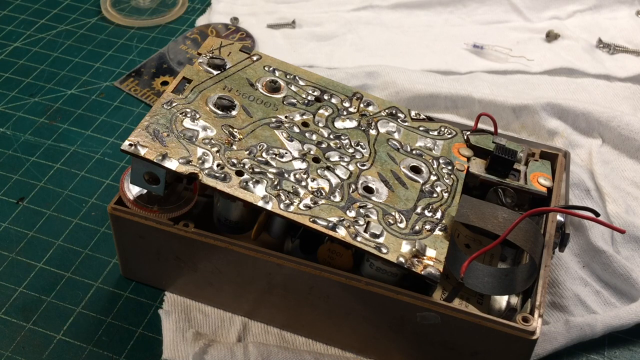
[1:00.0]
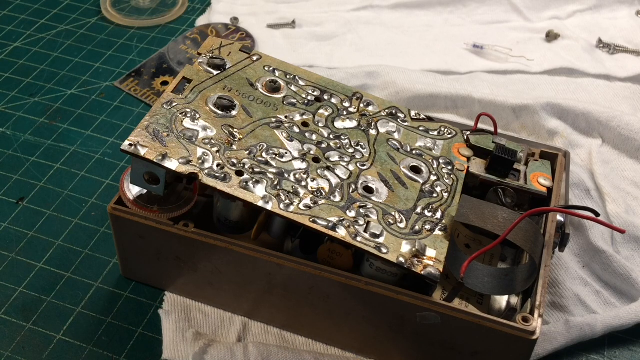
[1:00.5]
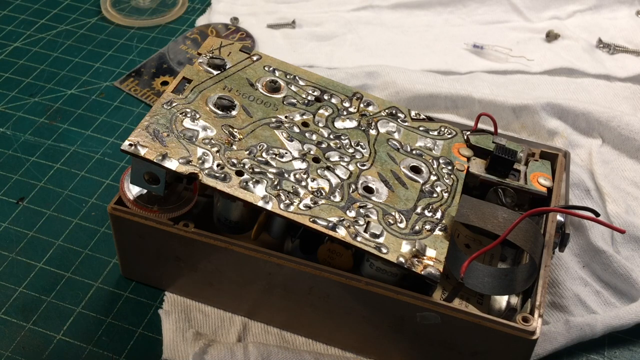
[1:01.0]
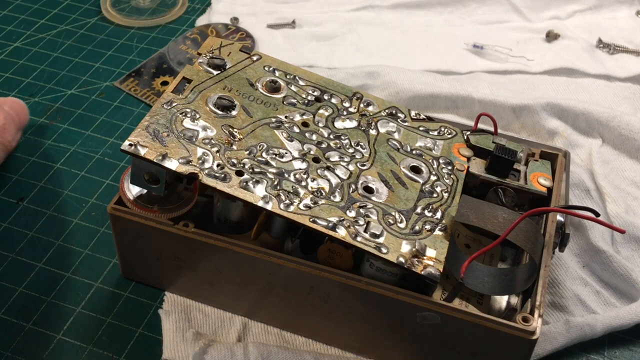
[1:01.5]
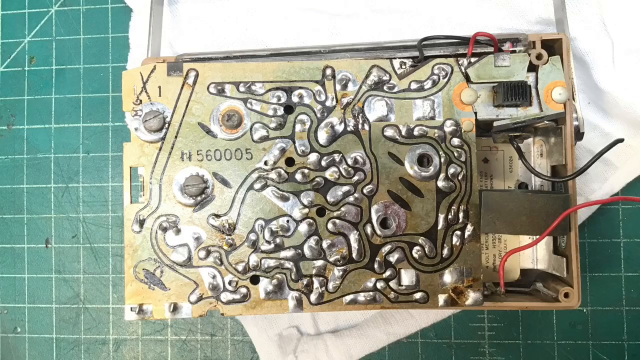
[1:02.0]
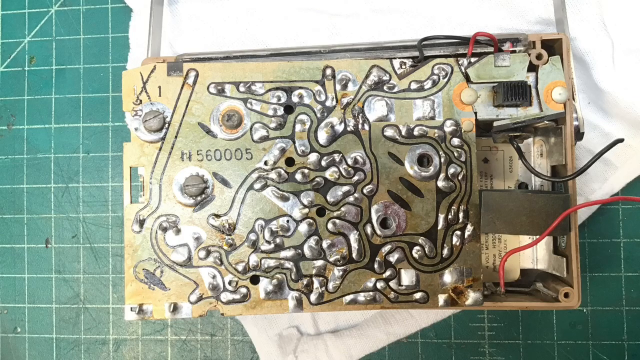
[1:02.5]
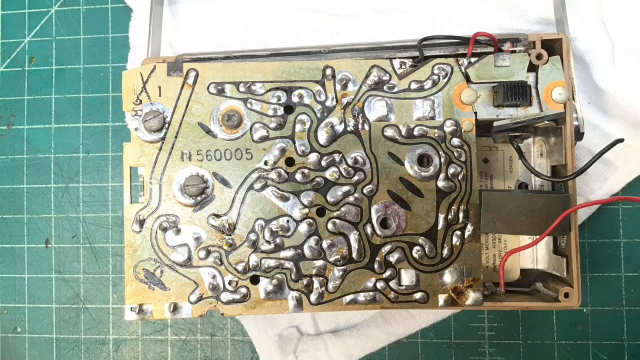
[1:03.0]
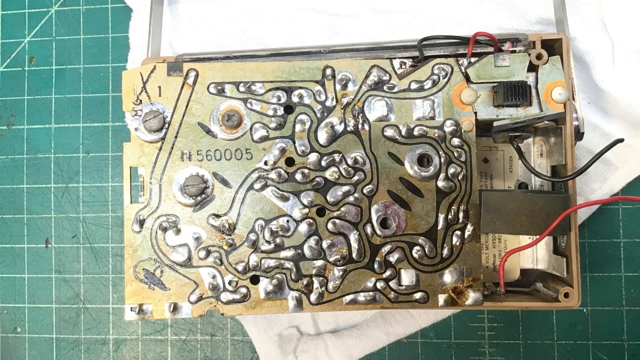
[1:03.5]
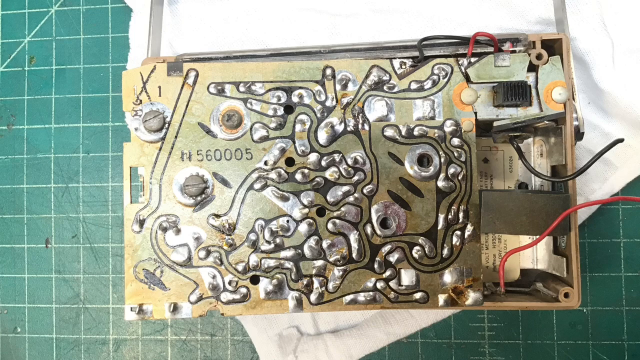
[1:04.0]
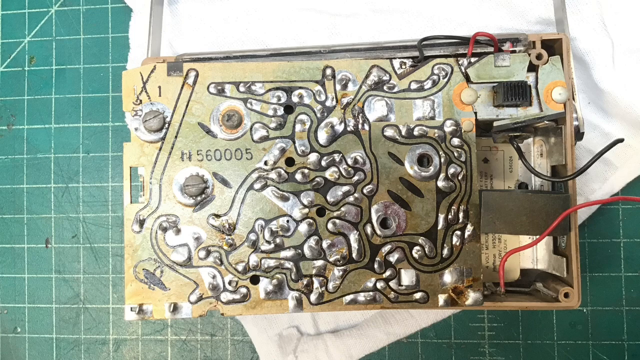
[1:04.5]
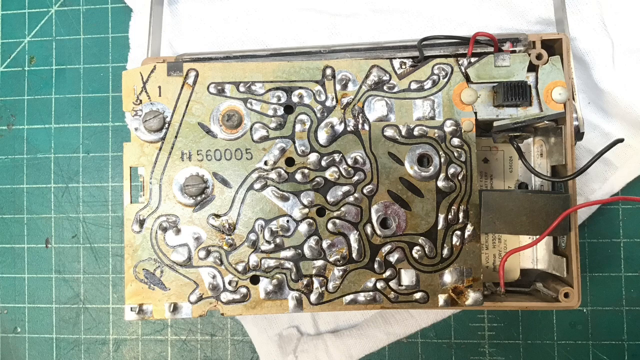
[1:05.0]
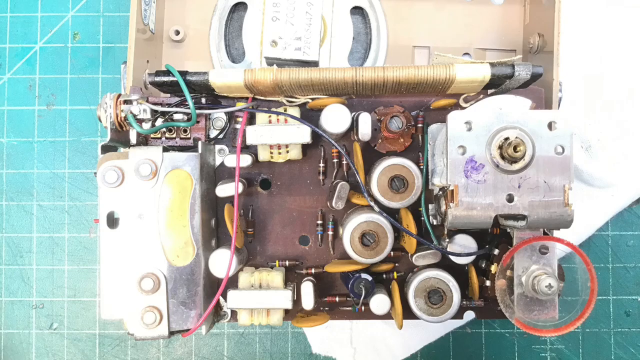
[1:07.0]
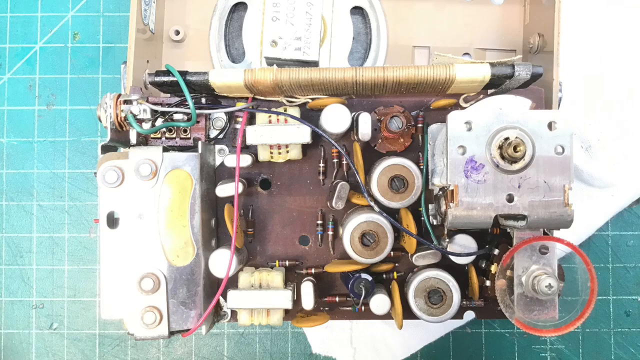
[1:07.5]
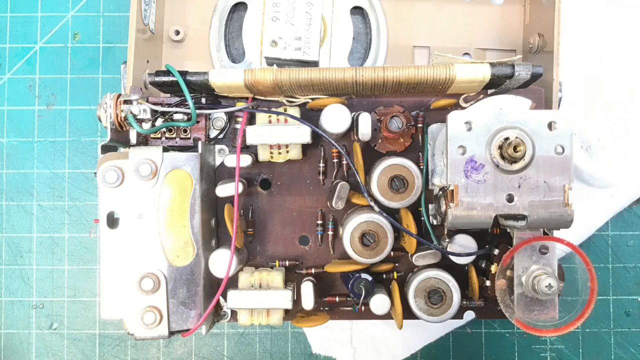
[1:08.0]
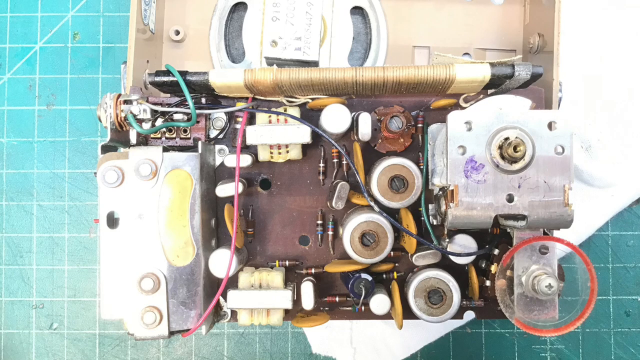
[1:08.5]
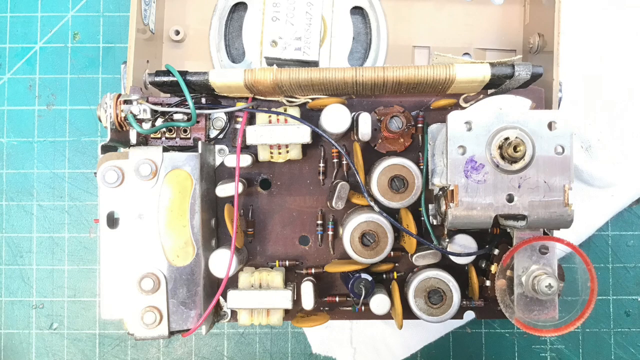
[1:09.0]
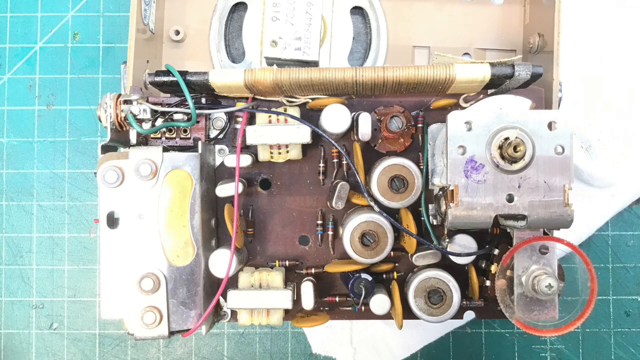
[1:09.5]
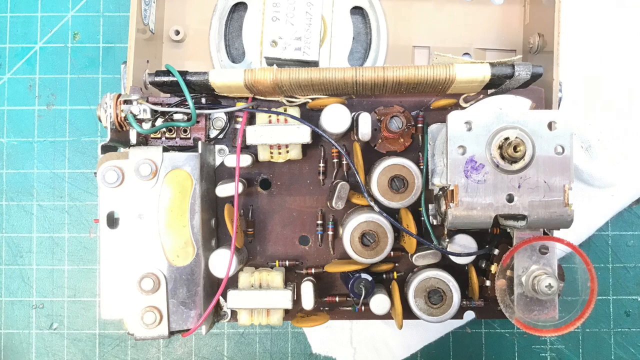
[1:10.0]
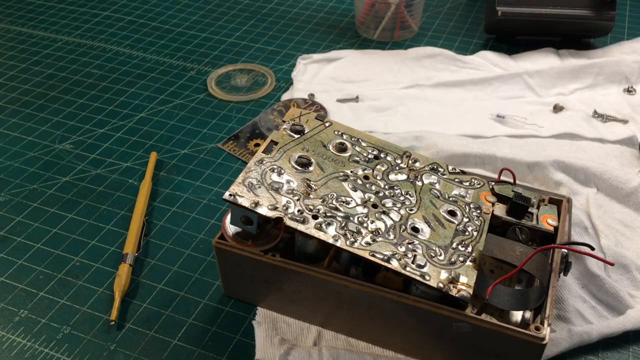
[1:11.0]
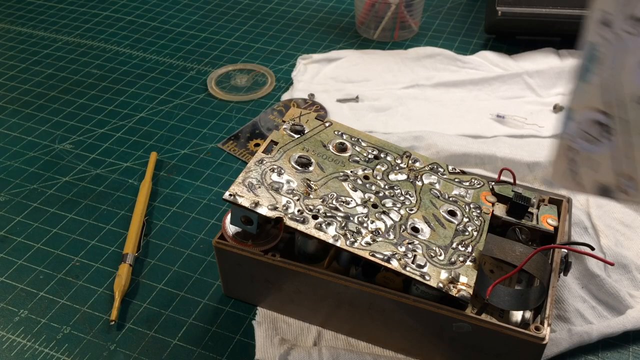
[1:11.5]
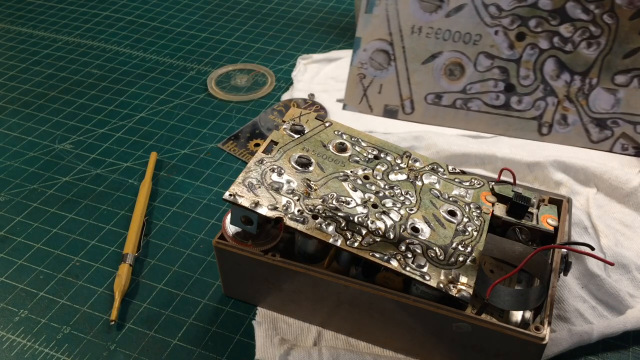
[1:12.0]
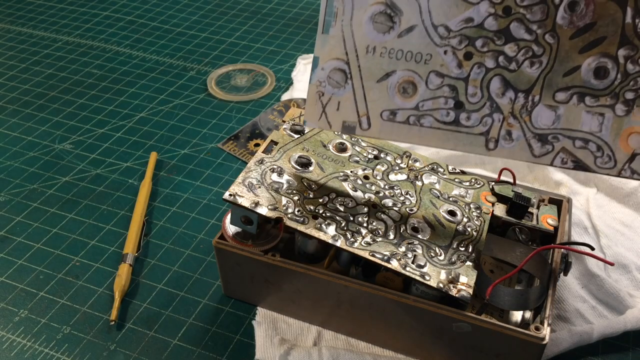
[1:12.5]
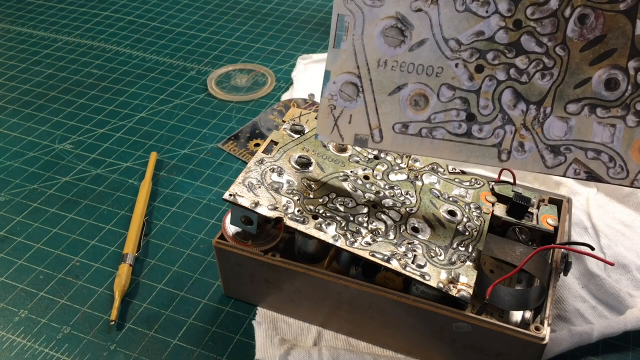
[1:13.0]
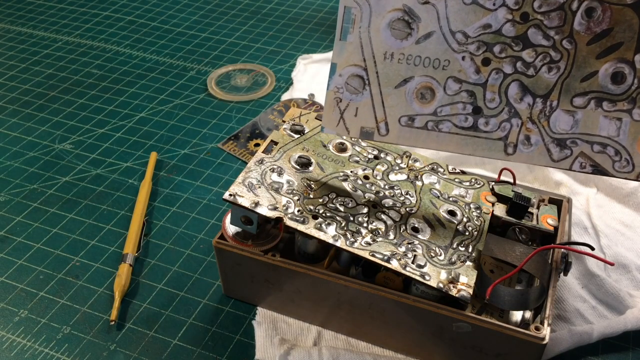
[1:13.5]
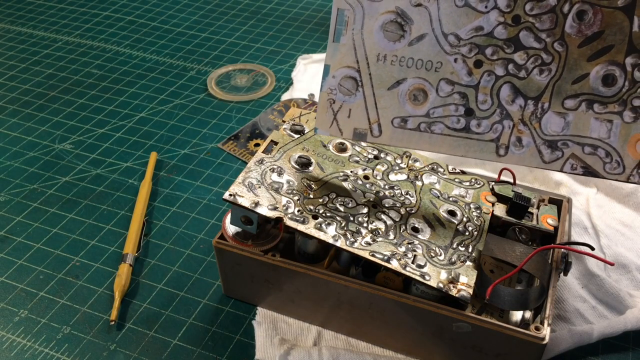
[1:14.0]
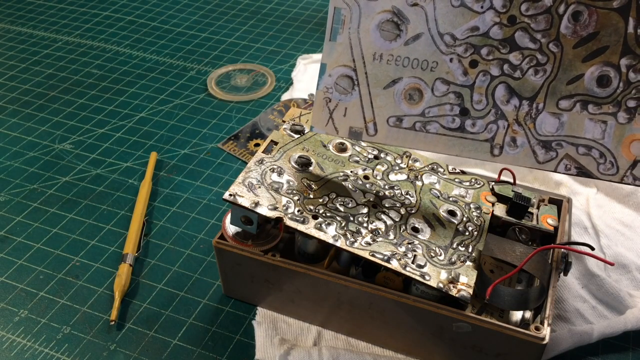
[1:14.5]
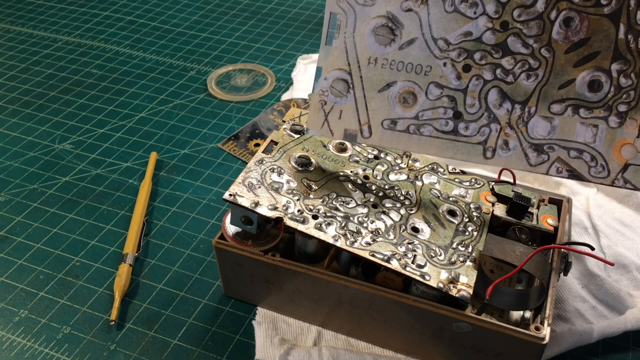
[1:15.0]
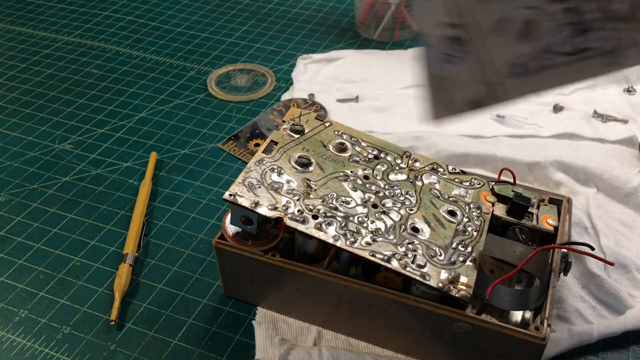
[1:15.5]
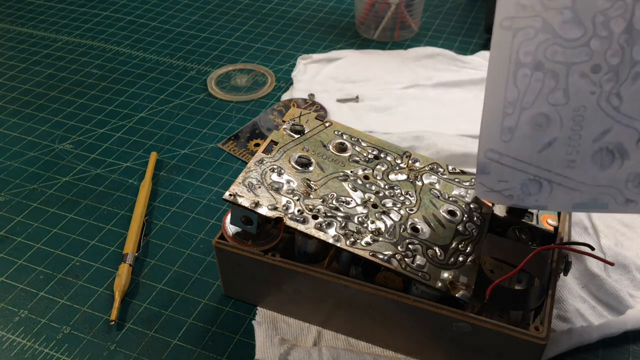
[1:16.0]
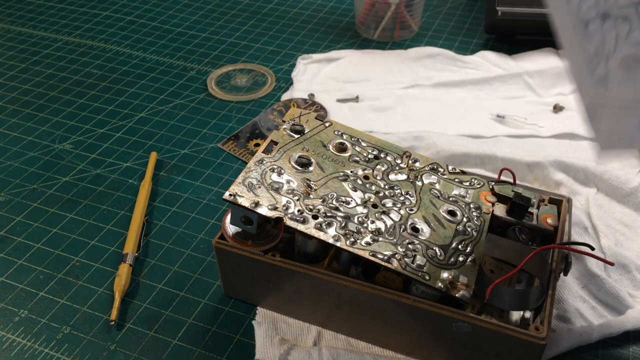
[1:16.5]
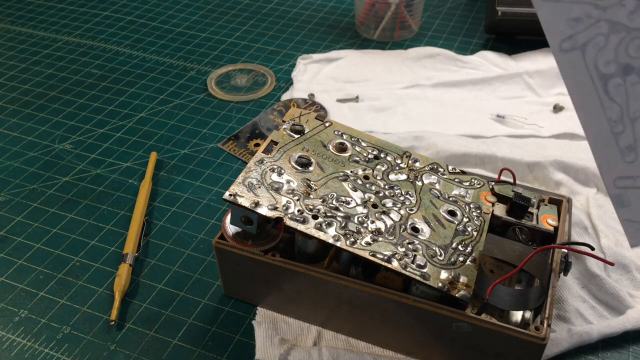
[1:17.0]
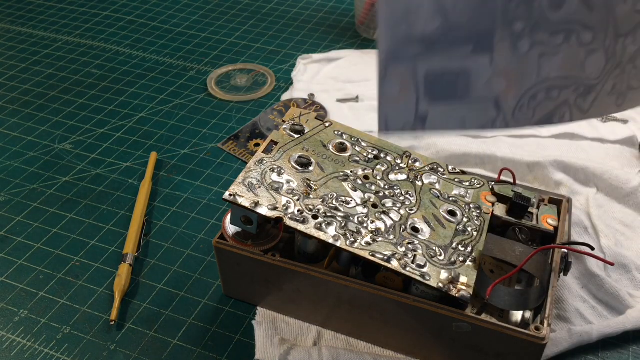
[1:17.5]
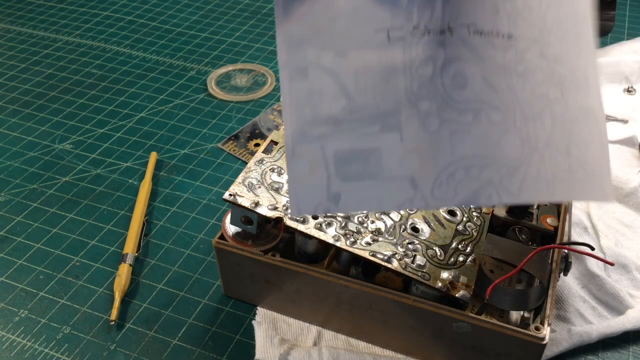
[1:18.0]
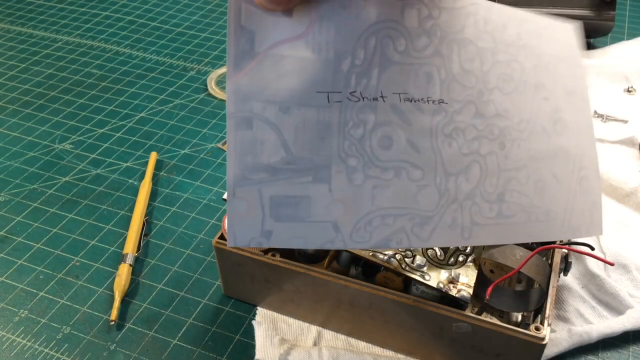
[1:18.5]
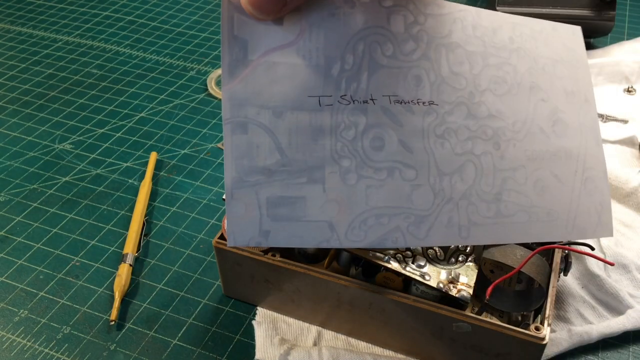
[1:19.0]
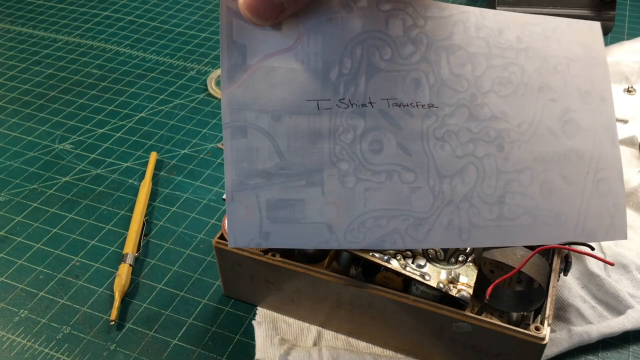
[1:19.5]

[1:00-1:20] The video switches to a different camera view that looks down from the top at the radio, still upside down. The white sheet is visible, and the radio and white sheet are placed on the green board; nothing happens for a while. Next, the radio is shown opened up, revealing all its mechanical structure. Then the view switches back to the first camera view, where the person holds a metal sheet, though his hands cannot be seen. It looks very similar to the metal sheet seen earlier, and he is possibly planning to replace it.